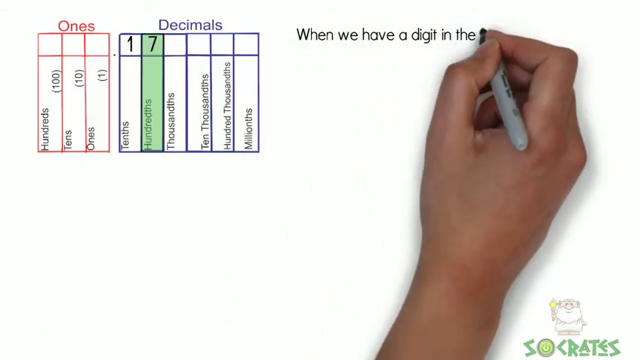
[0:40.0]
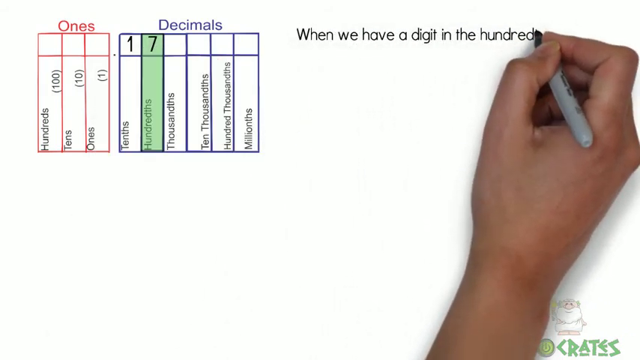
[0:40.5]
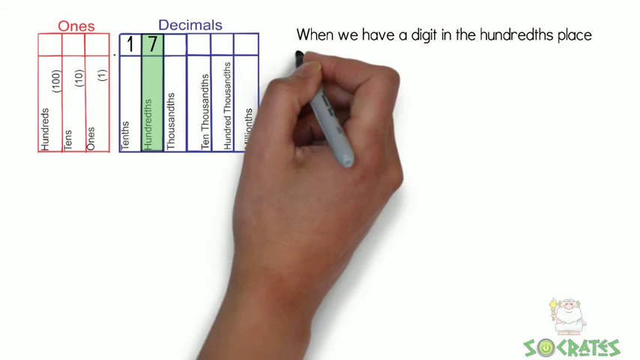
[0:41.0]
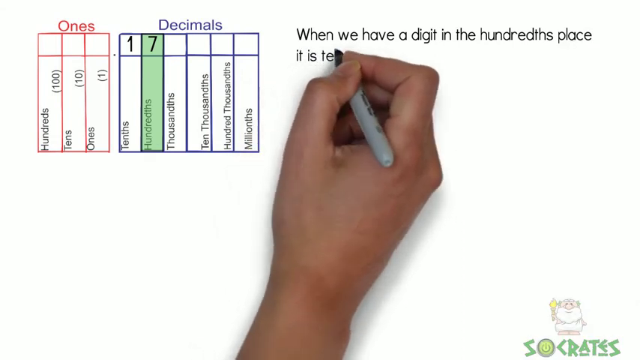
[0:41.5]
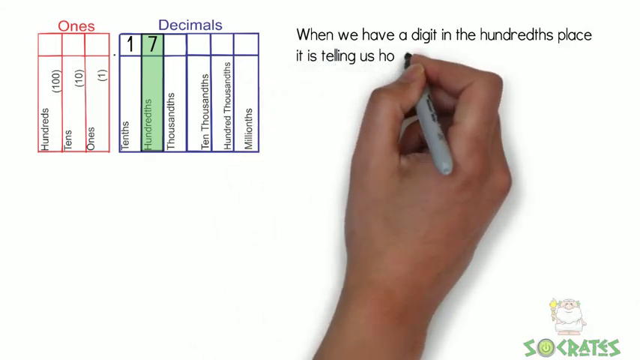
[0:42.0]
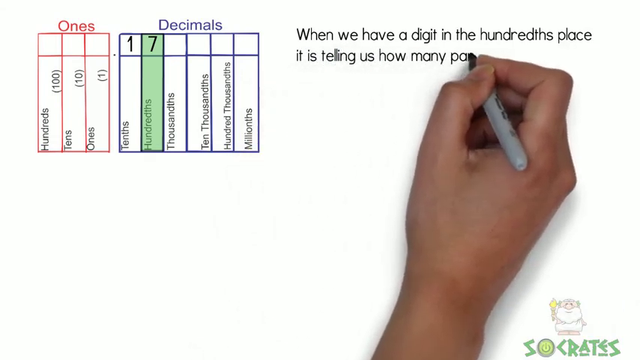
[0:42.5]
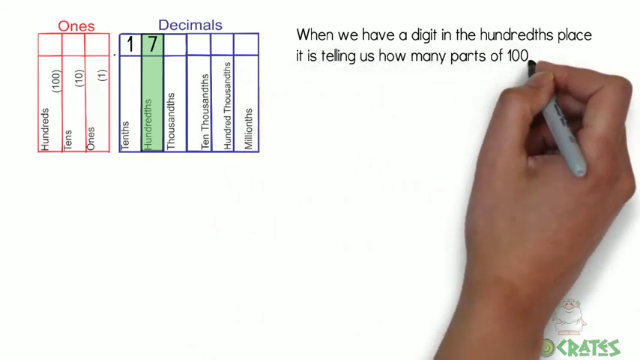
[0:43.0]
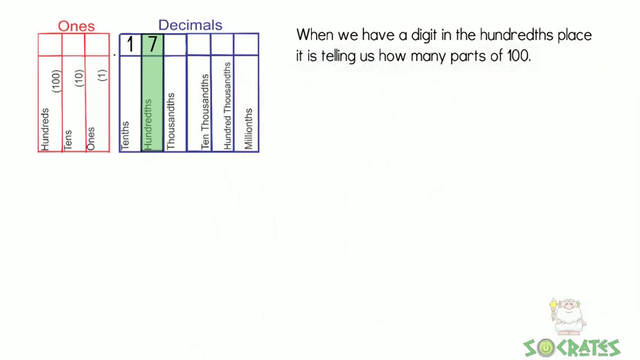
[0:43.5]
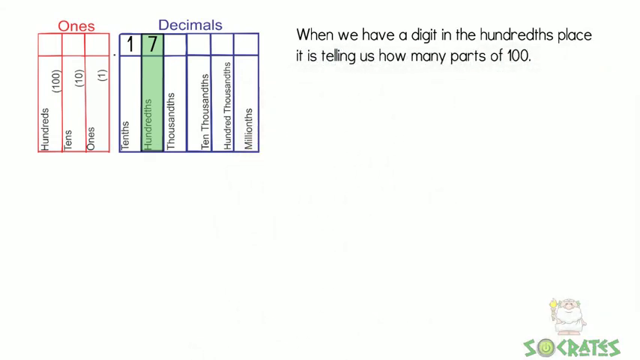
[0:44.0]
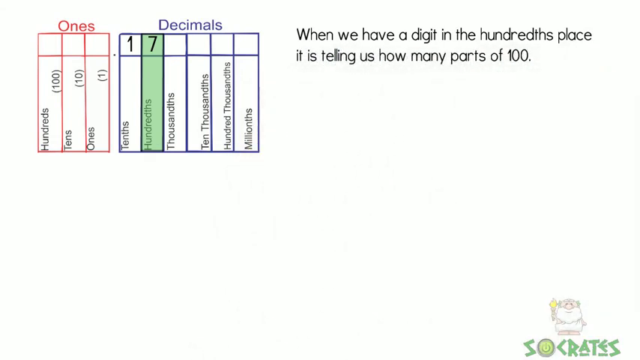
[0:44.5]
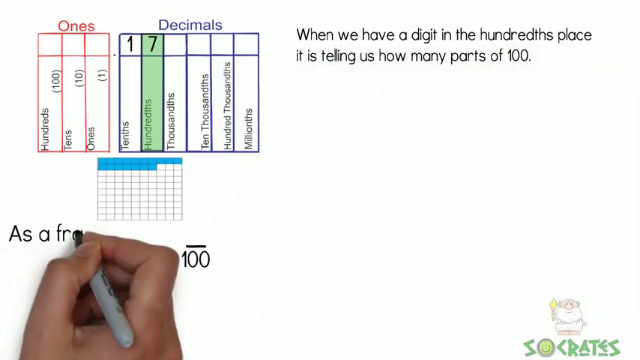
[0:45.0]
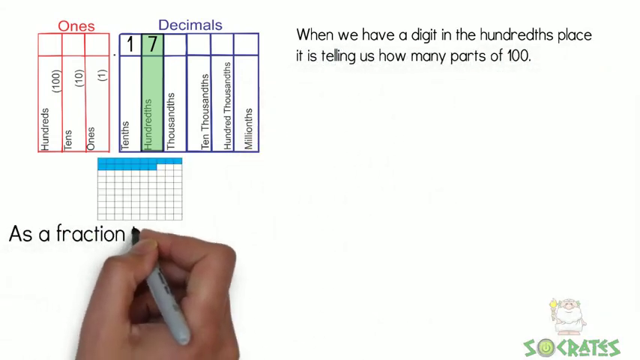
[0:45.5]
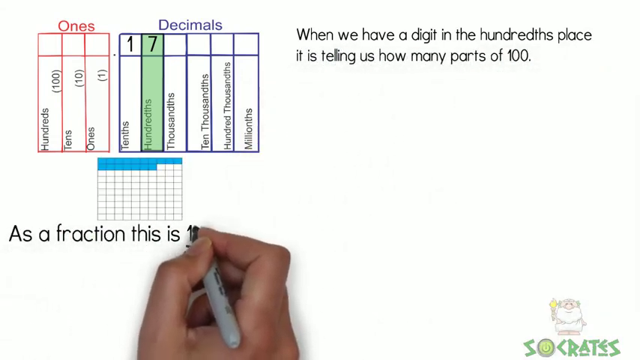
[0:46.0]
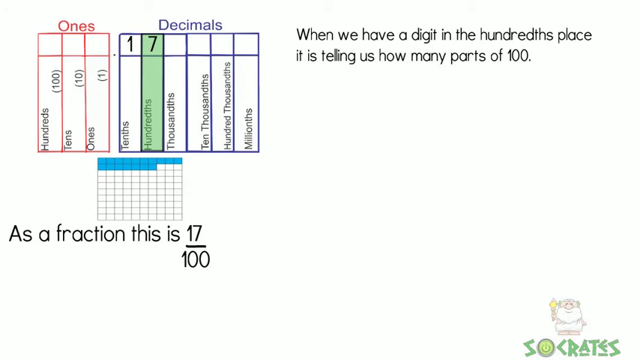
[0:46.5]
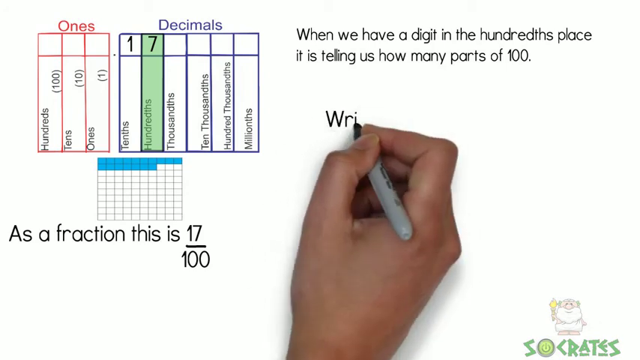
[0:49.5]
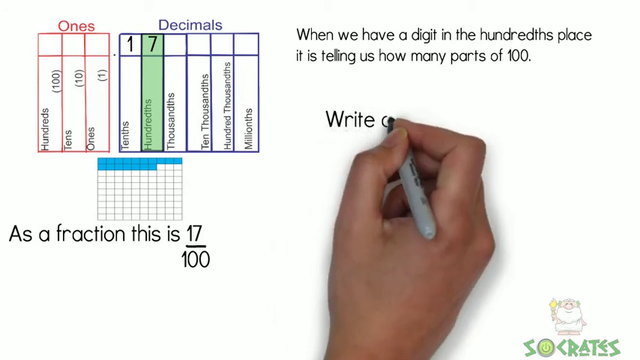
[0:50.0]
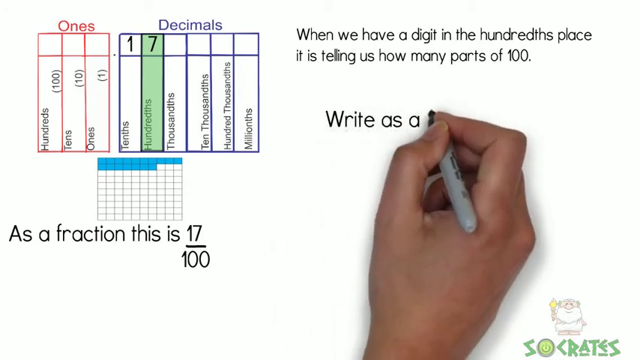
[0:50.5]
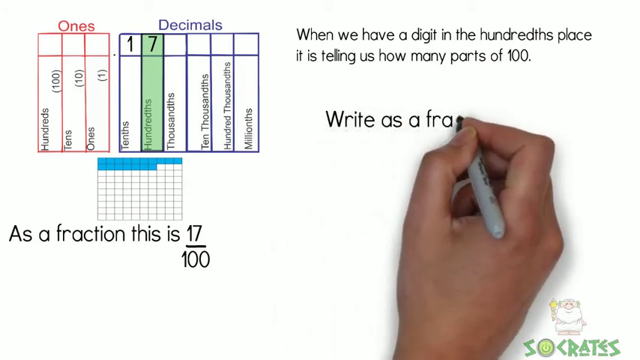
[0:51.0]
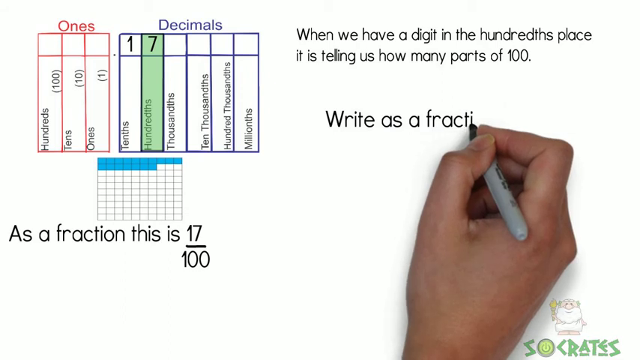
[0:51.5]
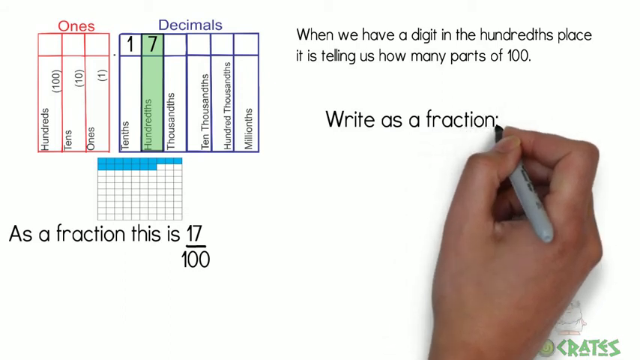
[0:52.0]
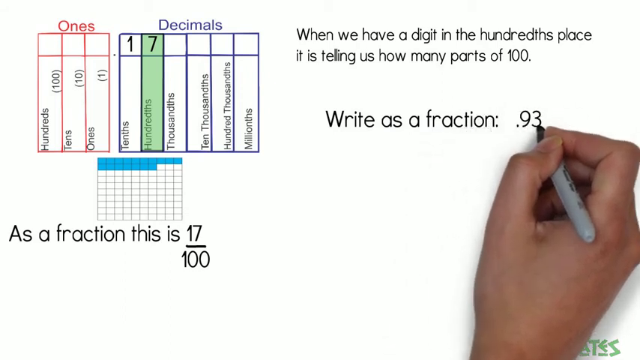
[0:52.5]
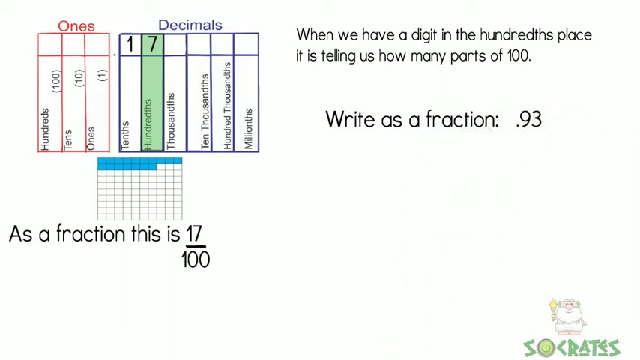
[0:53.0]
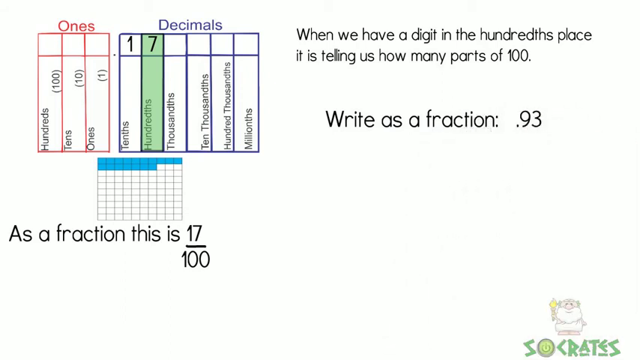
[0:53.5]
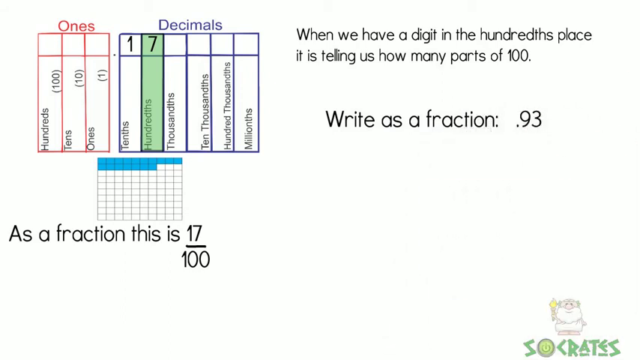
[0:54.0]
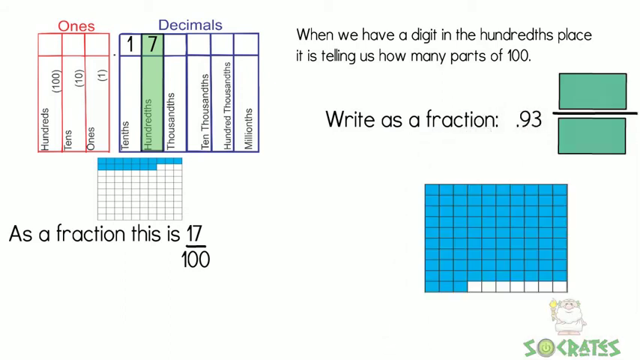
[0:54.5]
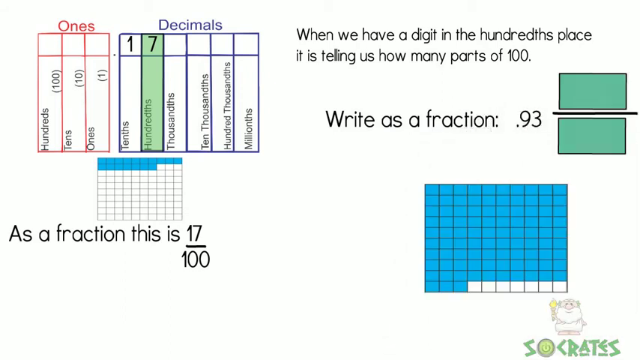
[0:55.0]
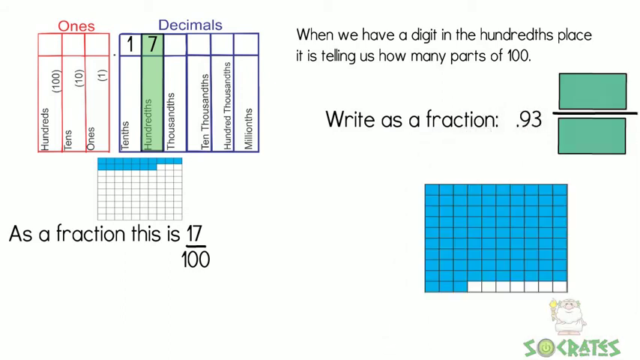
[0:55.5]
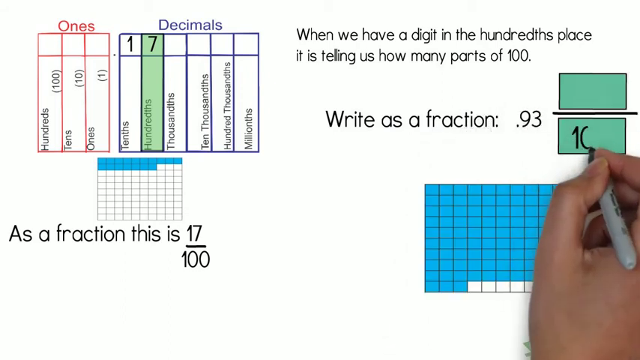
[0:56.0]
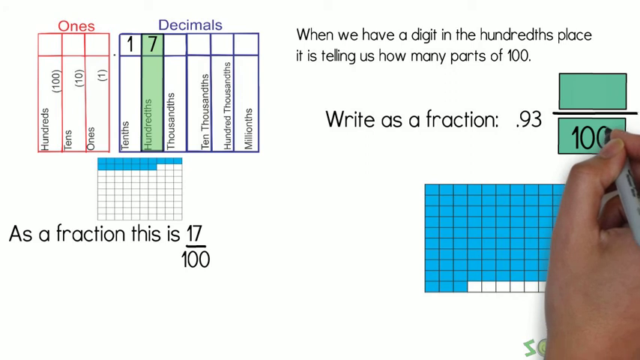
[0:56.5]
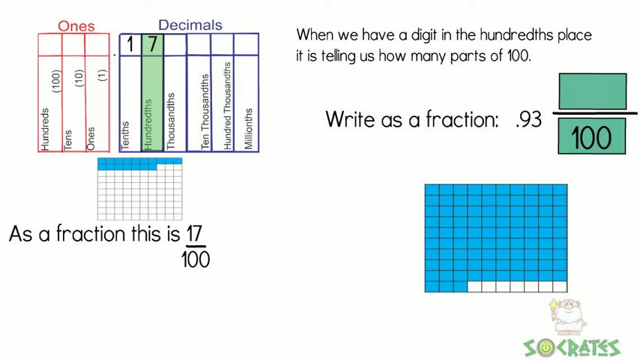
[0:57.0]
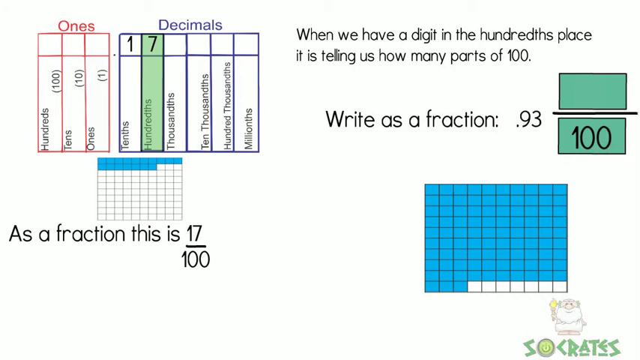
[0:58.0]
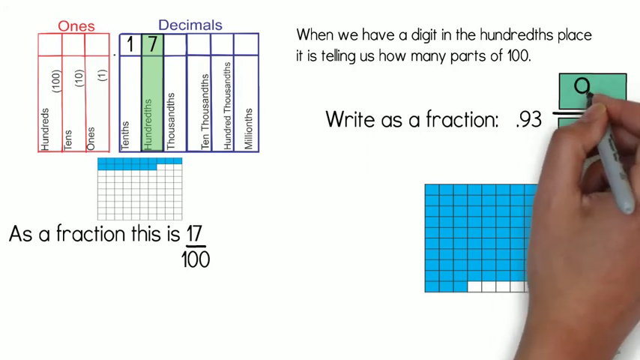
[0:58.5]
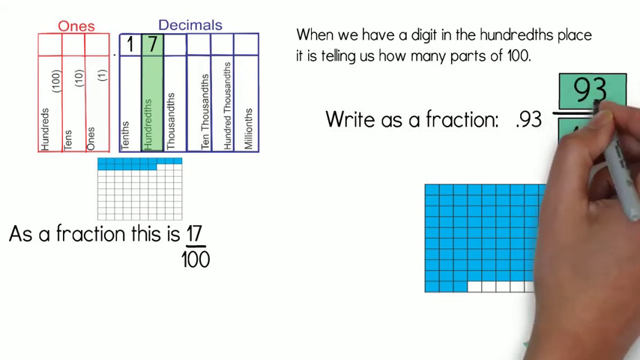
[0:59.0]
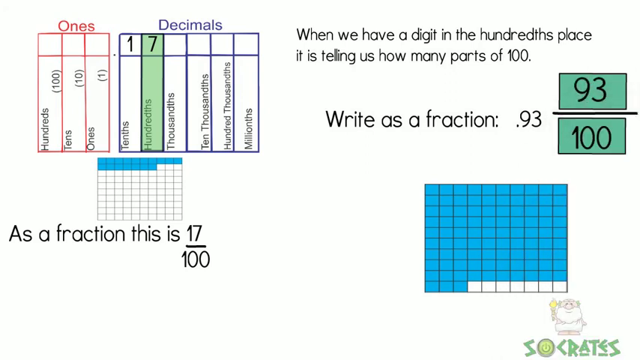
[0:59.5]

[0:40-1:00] Three blocks written in red are labelled "ones", and six highlighted blocks written in blue are labelled "decimals". A 1 is written under tenths and a 7 under hundredths, highlighted in green. On the right, a hand holding a black pen writes "when we have a digit in the hundredths place it is telling us how many parts of a 100." It continues writing "as a fraction this is 17 divided by 100", and 17 out of 100 blocks are highlighted in blue. It then writes "write as a fraction .93"; the fraction is 93 divided by 100, and 93 out of 100 blocks are highlighted in blue. In the bottom right corner is an animal holding up a candle and the word "SOCRATS".